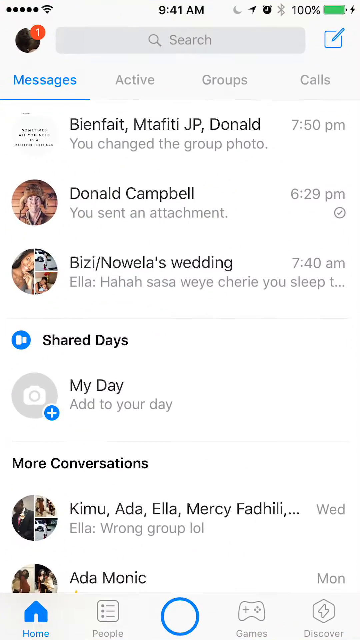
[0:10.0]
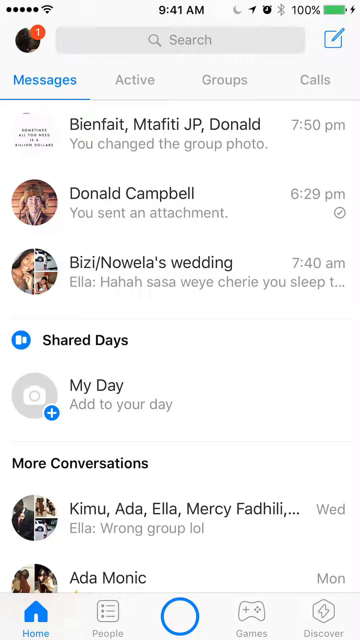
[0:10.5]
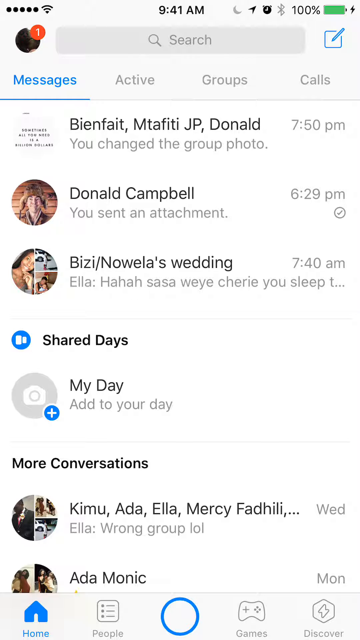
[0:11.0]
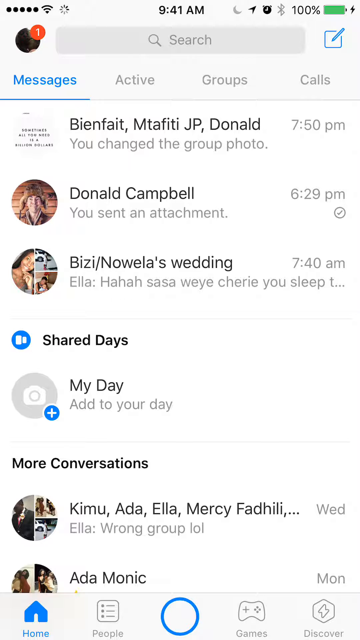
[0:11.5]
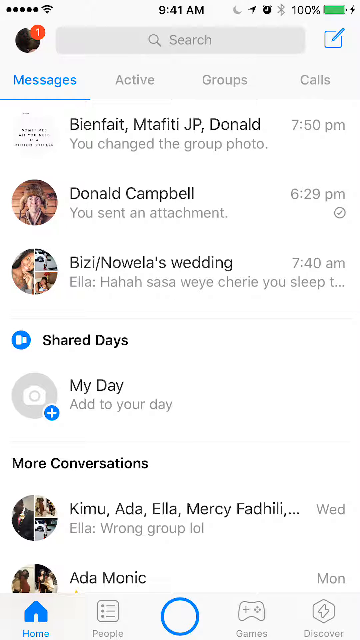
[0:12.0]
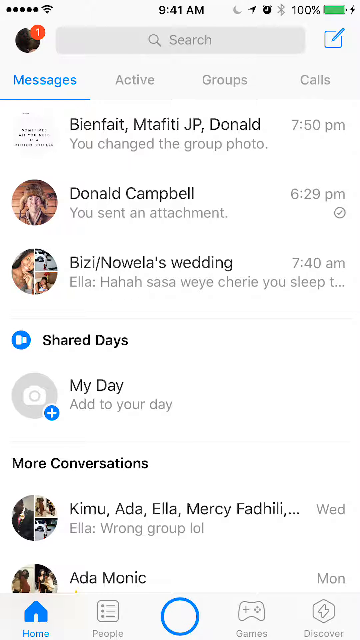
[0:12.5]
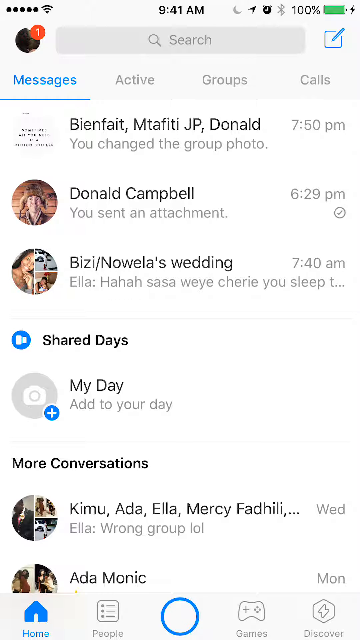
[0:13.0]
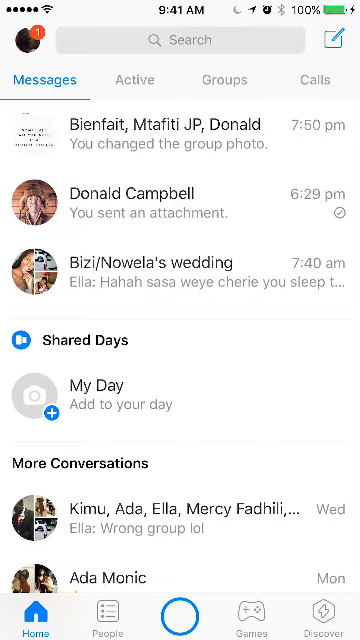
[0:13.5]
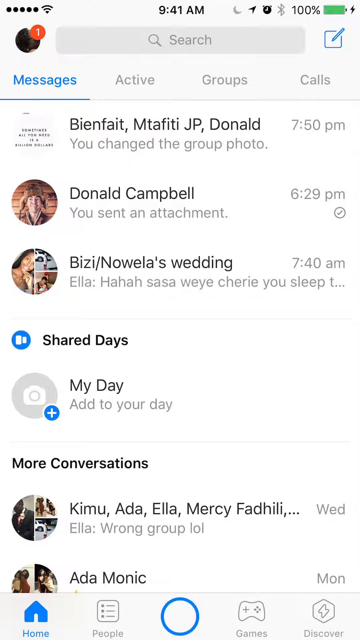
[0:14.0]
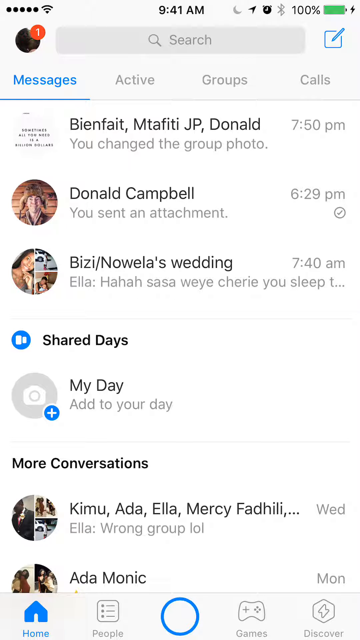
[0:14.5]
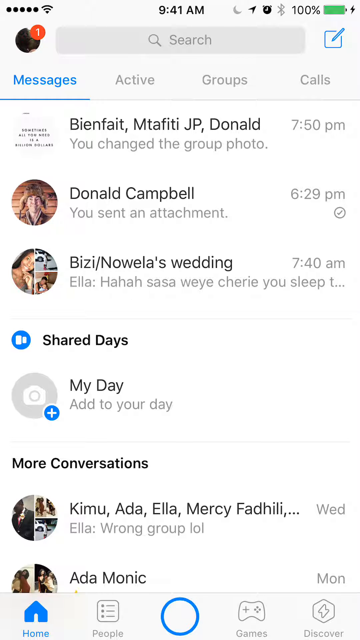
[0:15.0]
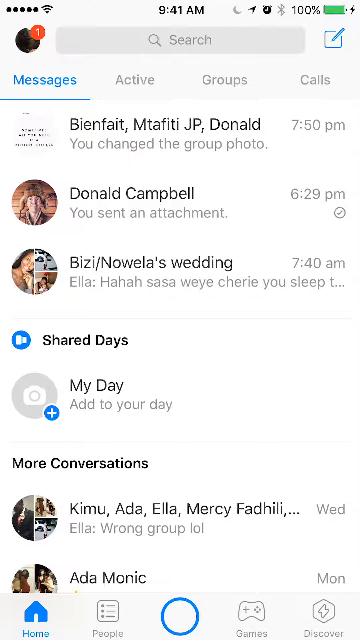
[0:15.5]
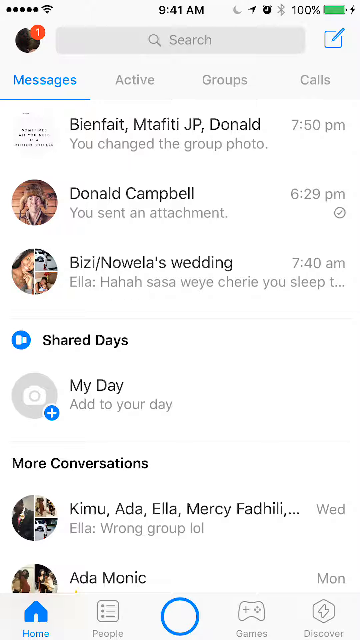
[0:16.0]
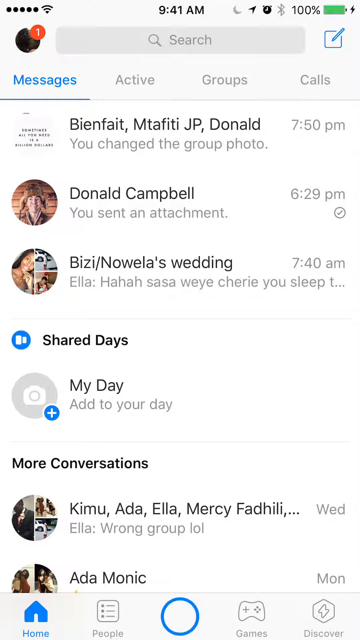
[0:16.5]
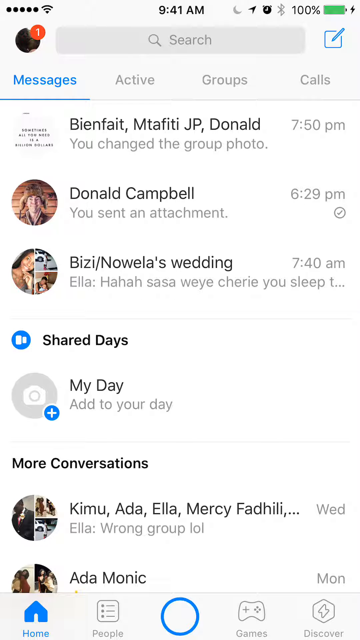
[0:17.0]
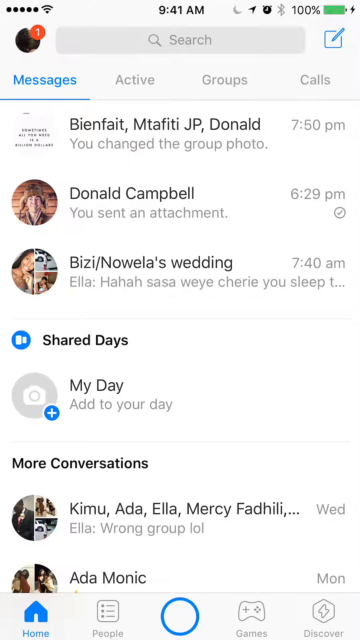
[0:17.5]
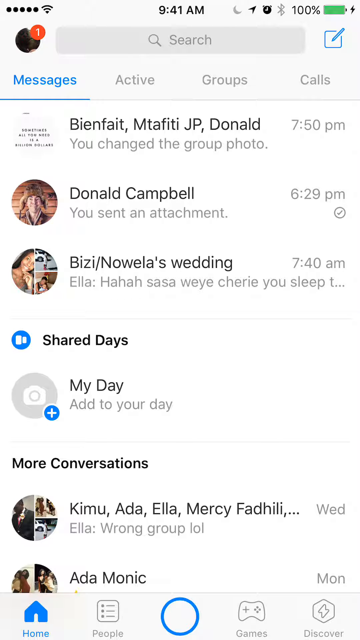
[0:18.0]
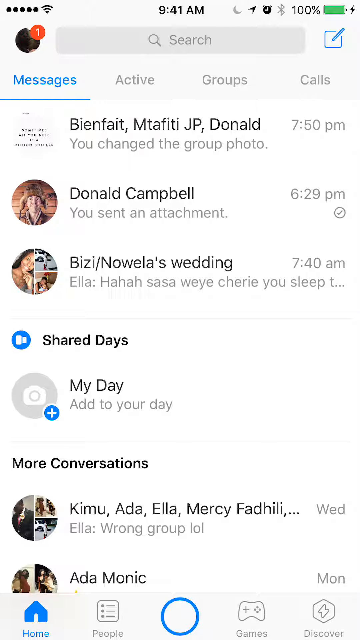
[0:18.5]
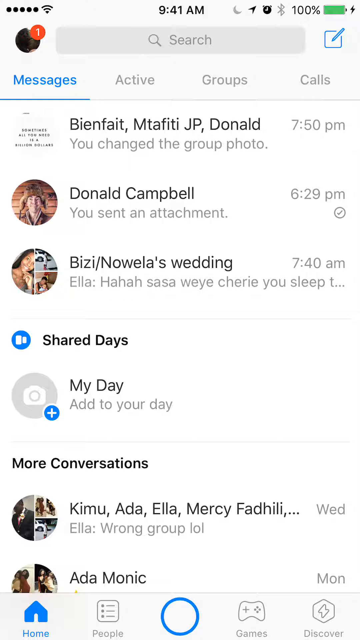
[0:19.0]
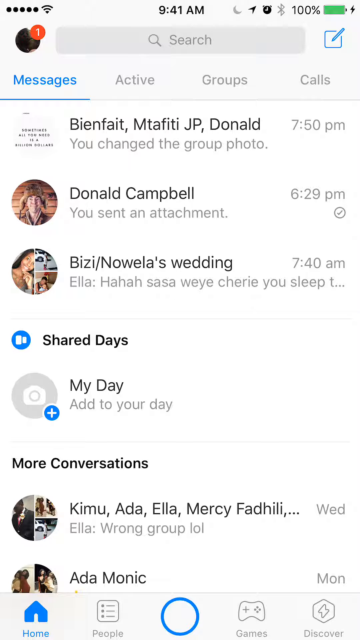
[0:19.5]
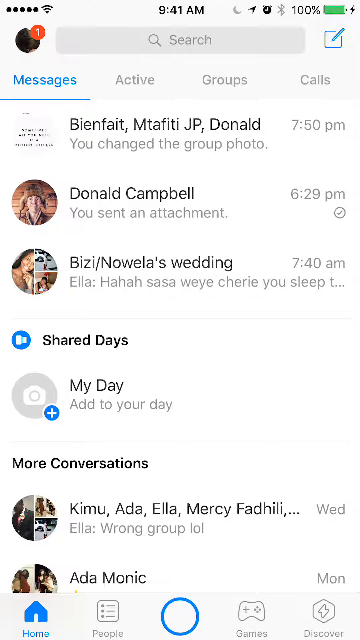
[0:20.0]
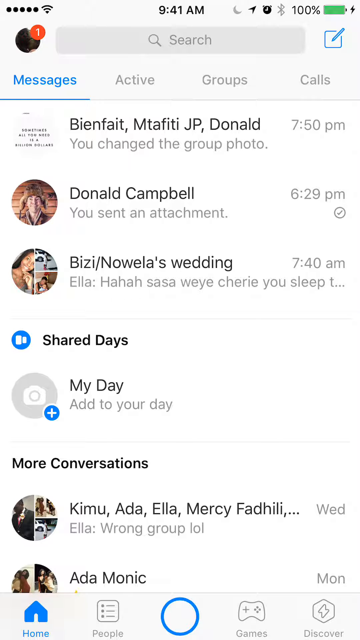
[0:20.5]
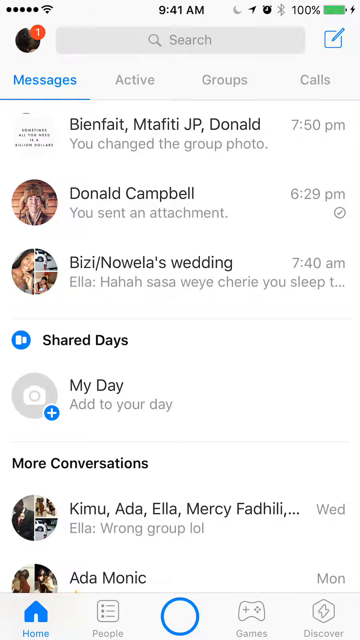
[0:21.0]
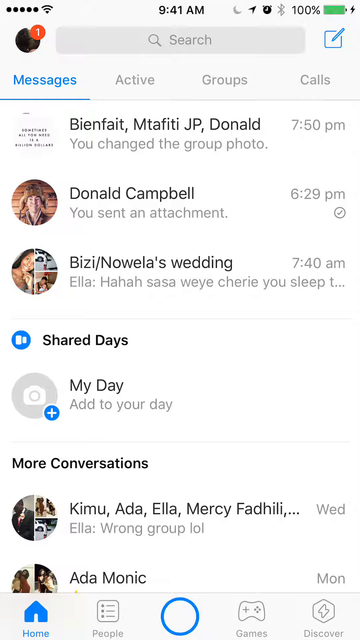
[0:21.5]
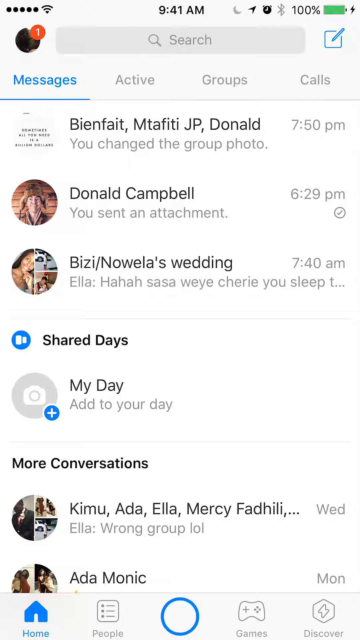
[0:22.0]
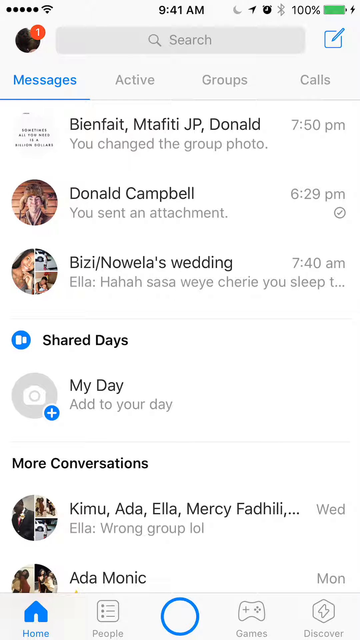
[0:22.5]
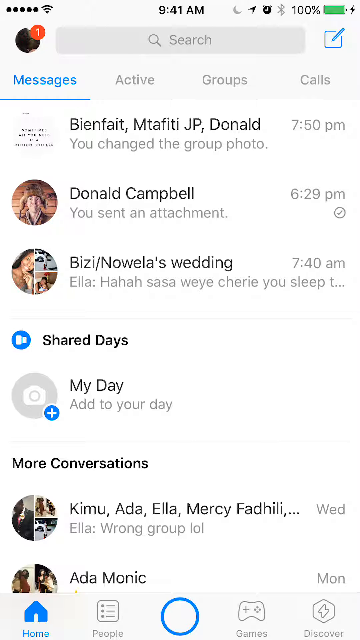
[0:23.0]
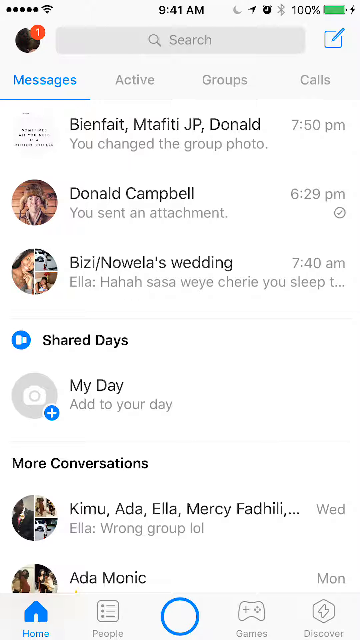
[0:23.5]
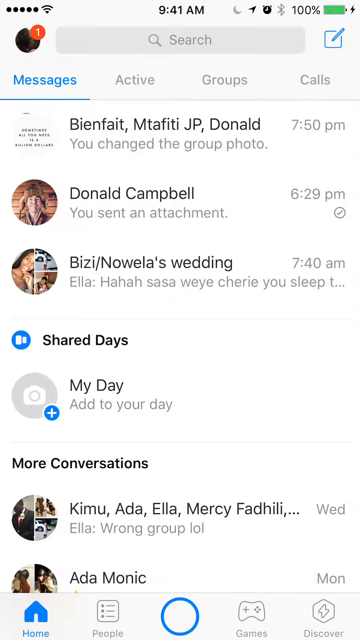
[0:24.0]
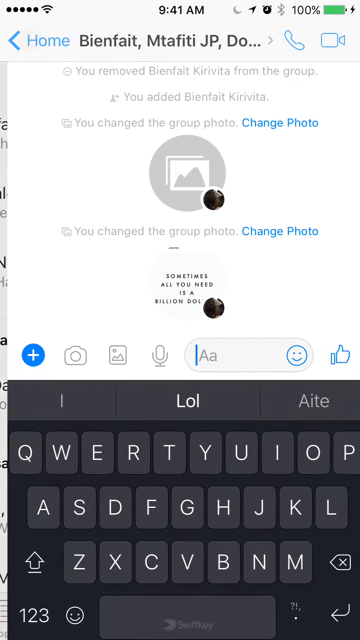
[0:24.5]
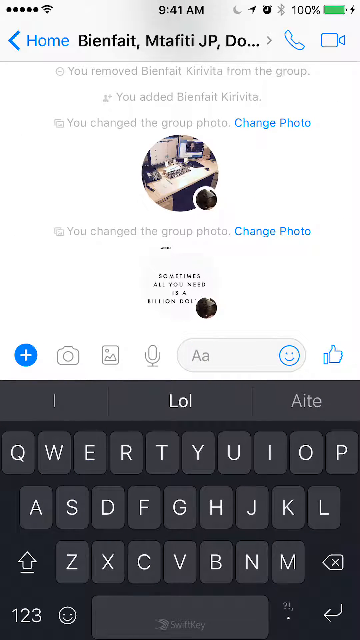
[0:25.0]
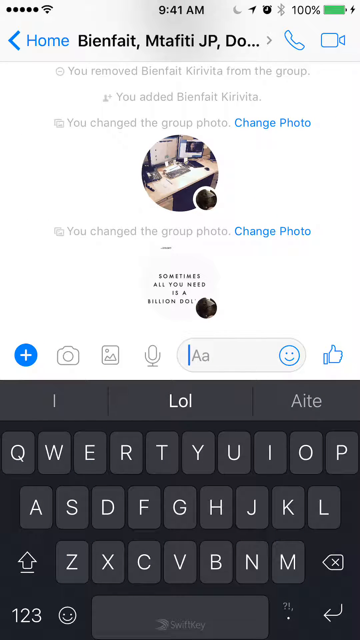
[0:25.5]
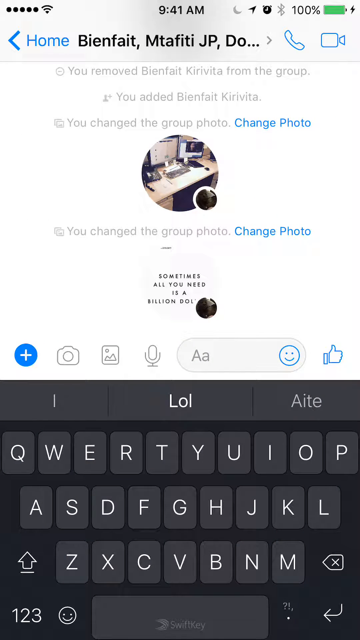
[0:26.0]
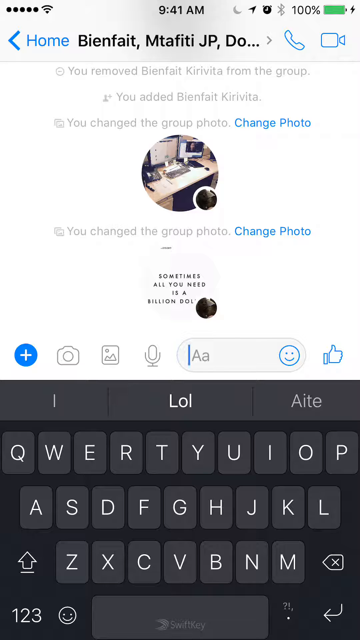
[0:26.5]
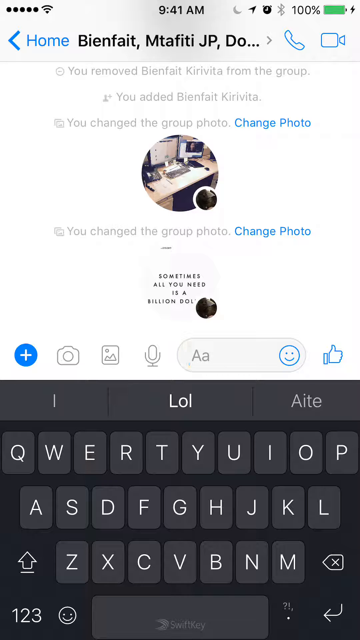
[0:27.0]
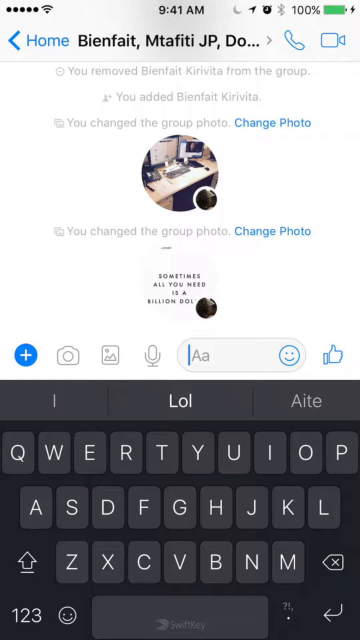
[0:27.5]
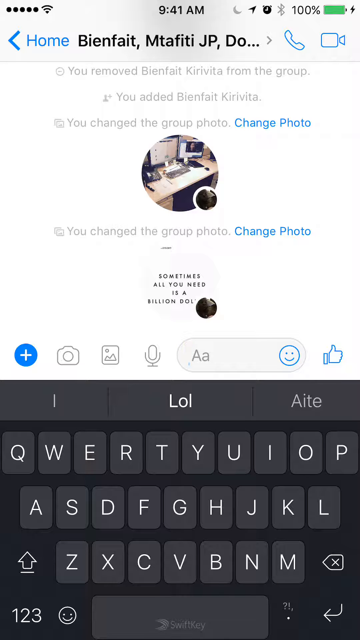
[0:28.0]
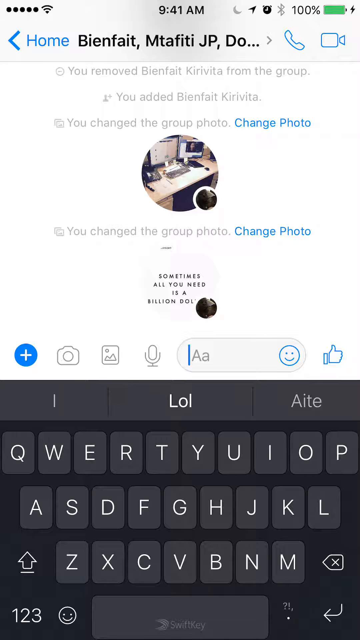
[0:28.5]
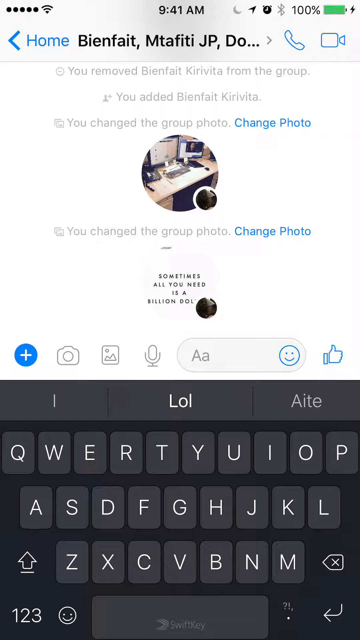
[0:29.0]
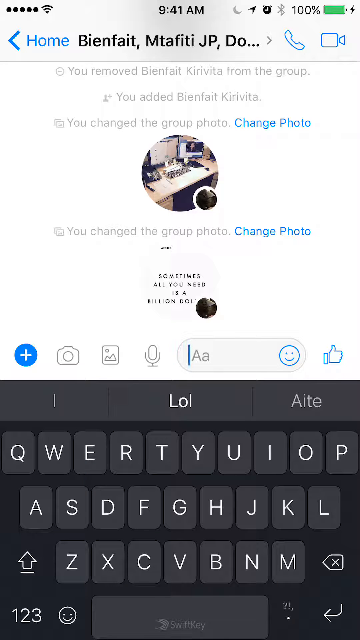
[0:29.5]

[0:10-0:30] One of the apps is active: a WhatsApp application opened on the phone. There is a message icon, and a list of contacts is displayed on the screen. Options for activities, call and group appear, along with an option to change the photo icon, the display picture on the profile.